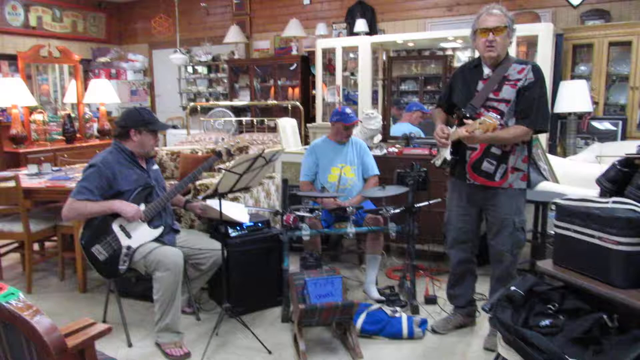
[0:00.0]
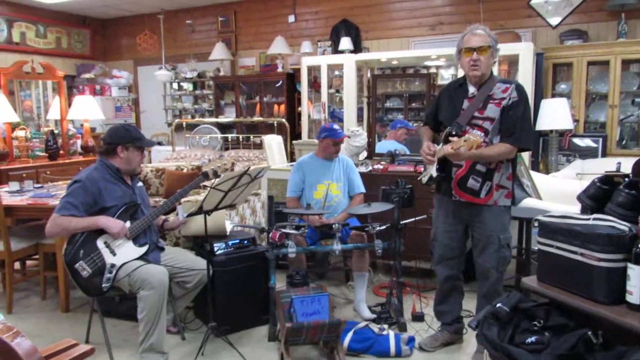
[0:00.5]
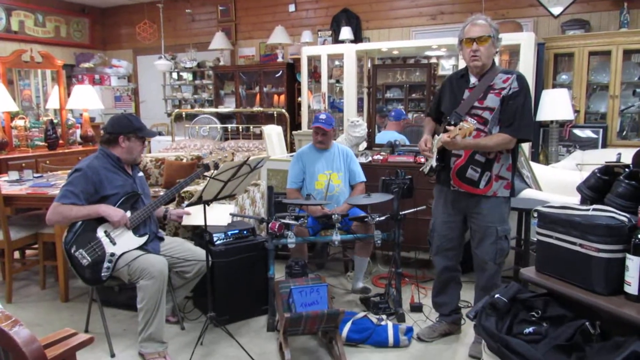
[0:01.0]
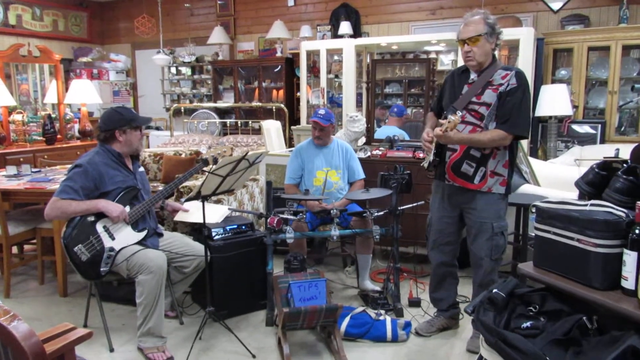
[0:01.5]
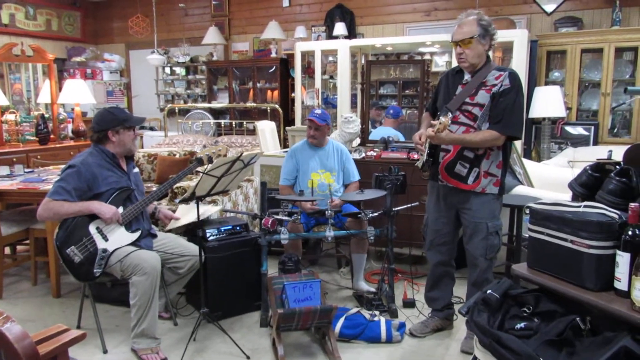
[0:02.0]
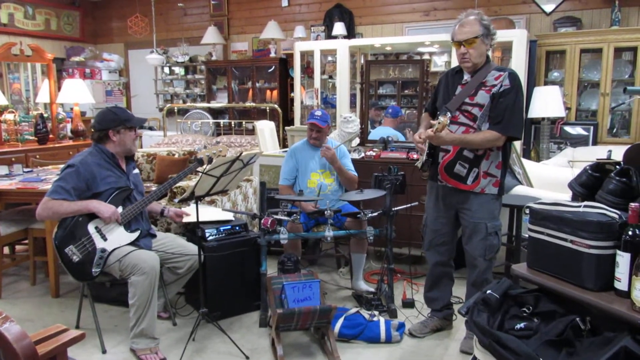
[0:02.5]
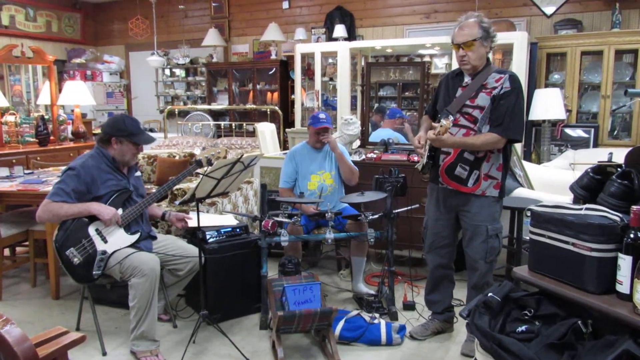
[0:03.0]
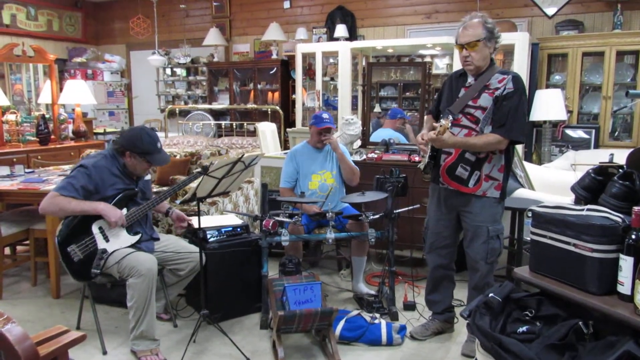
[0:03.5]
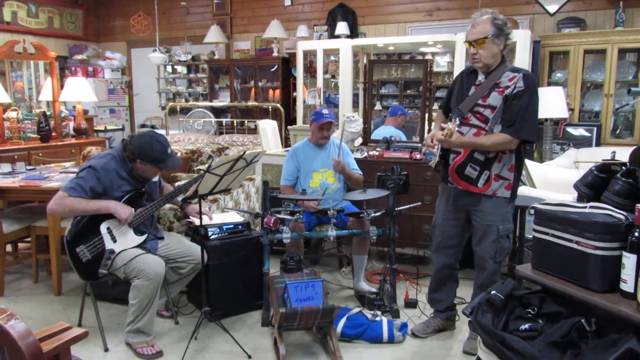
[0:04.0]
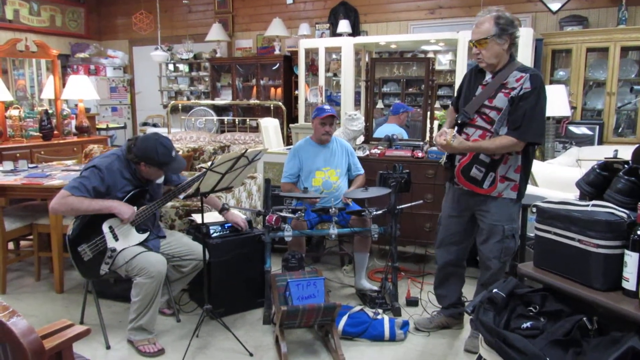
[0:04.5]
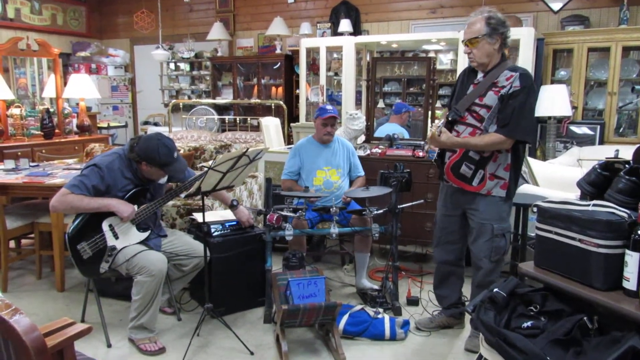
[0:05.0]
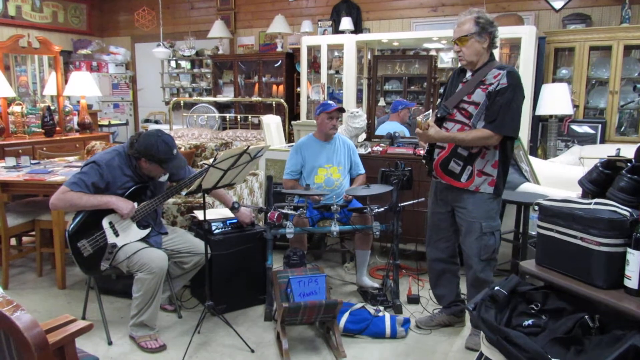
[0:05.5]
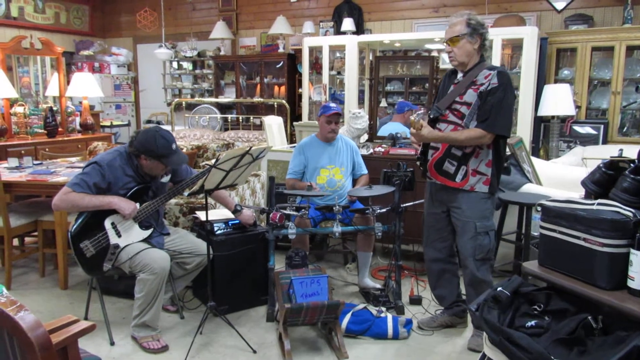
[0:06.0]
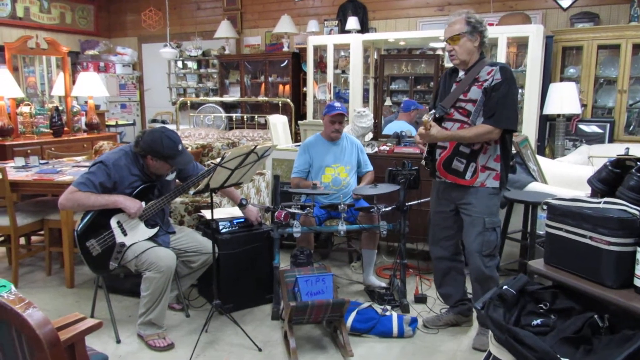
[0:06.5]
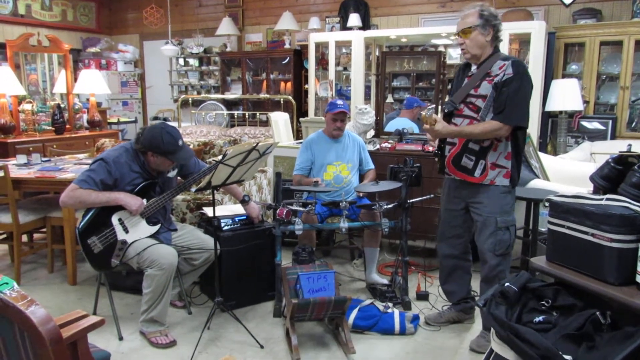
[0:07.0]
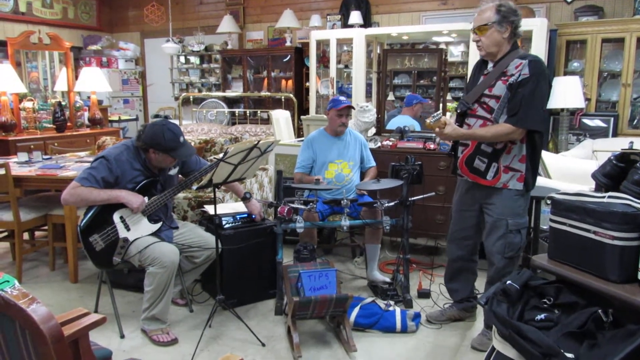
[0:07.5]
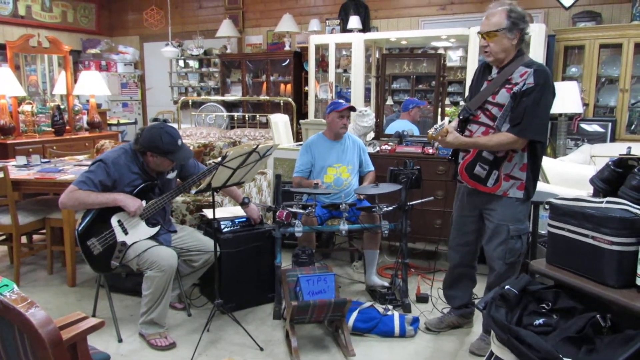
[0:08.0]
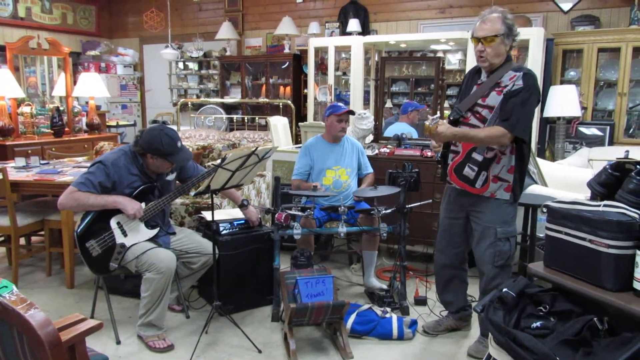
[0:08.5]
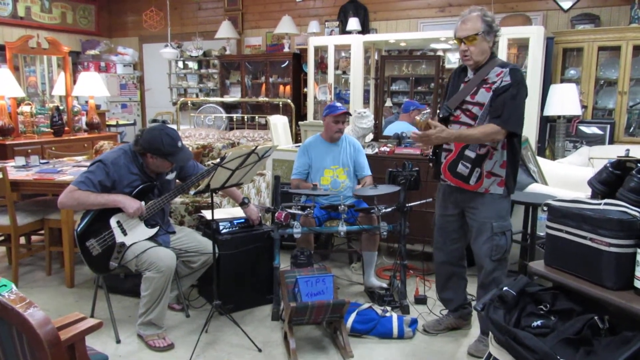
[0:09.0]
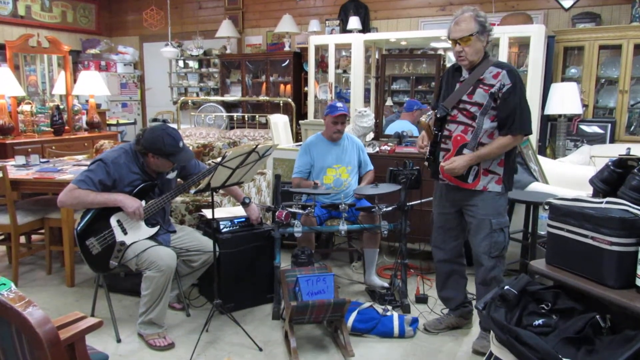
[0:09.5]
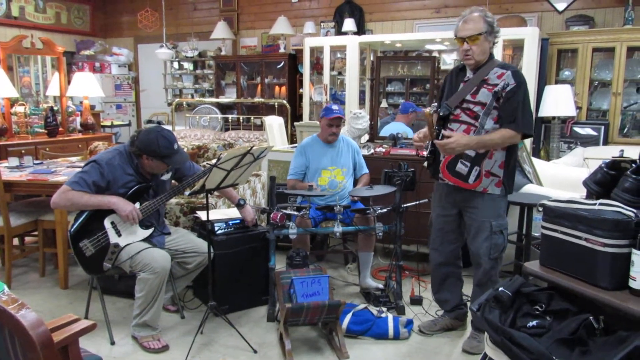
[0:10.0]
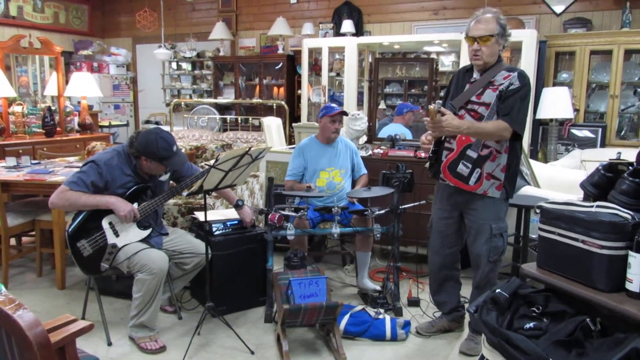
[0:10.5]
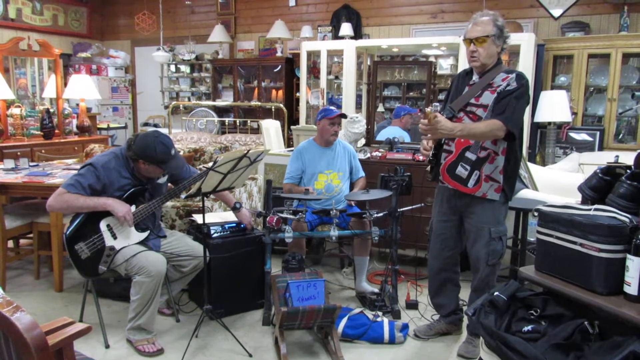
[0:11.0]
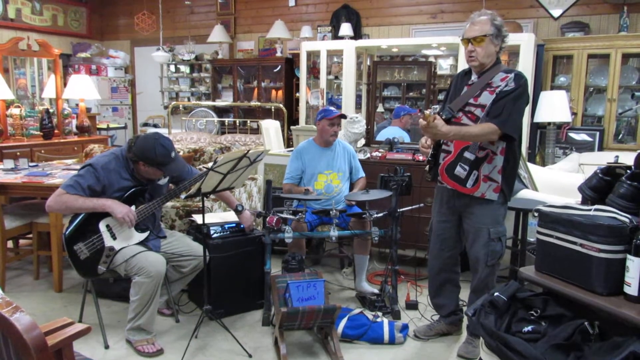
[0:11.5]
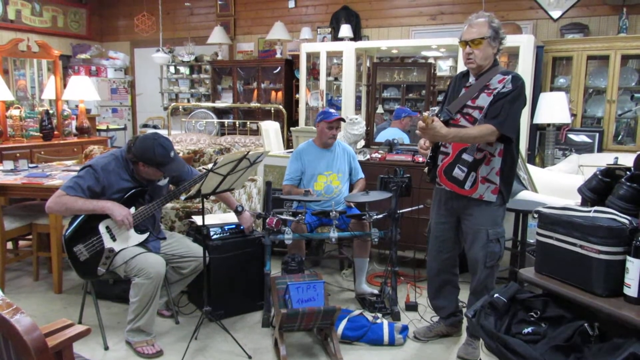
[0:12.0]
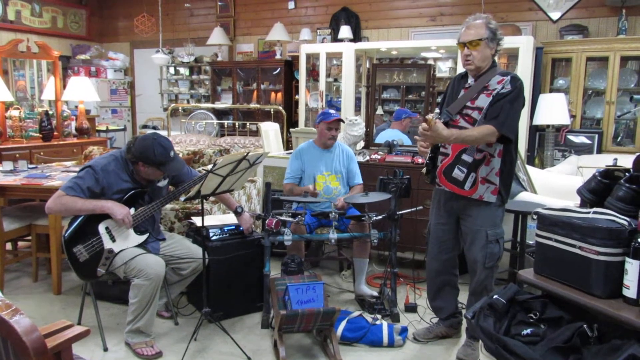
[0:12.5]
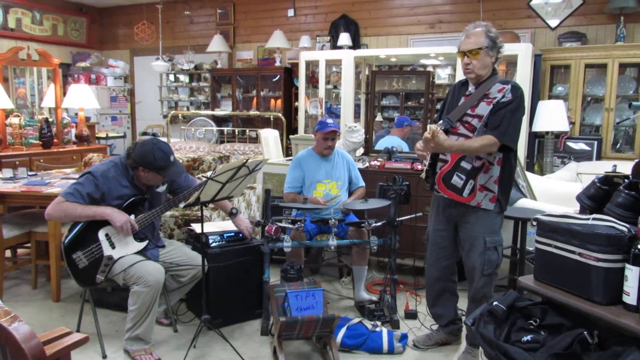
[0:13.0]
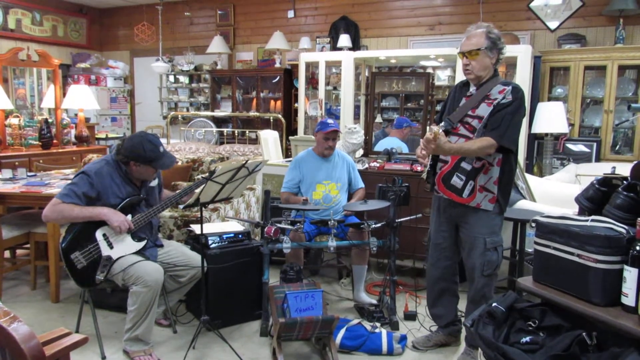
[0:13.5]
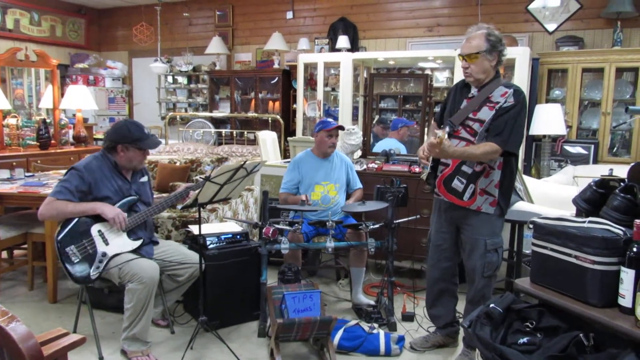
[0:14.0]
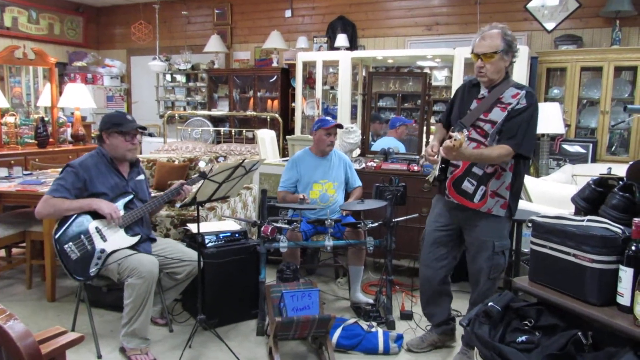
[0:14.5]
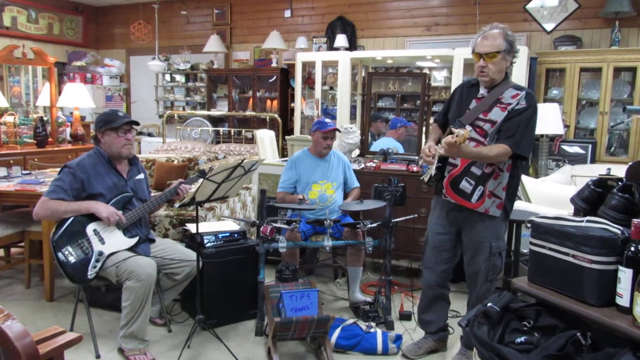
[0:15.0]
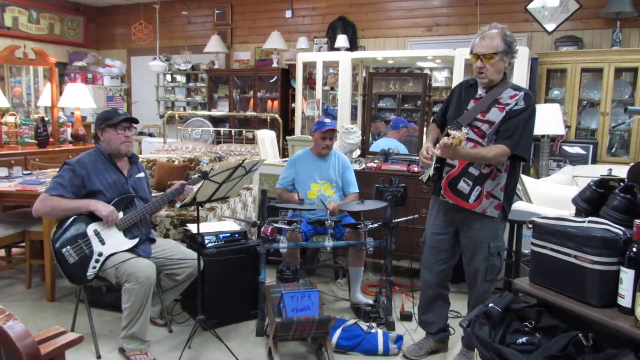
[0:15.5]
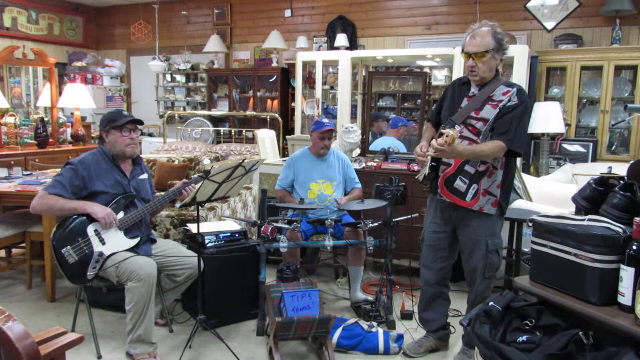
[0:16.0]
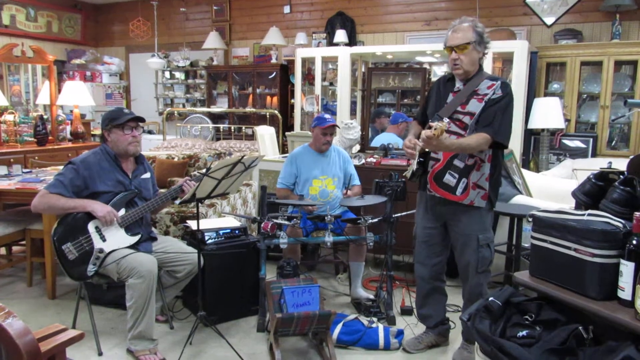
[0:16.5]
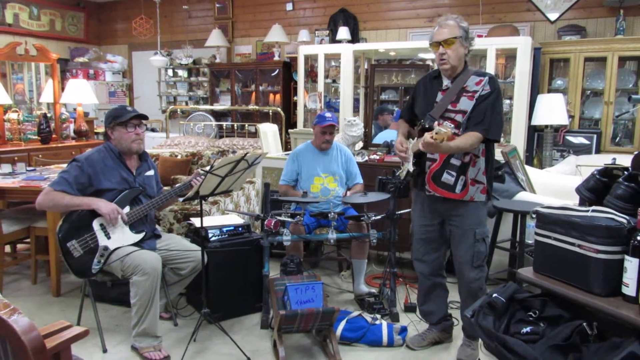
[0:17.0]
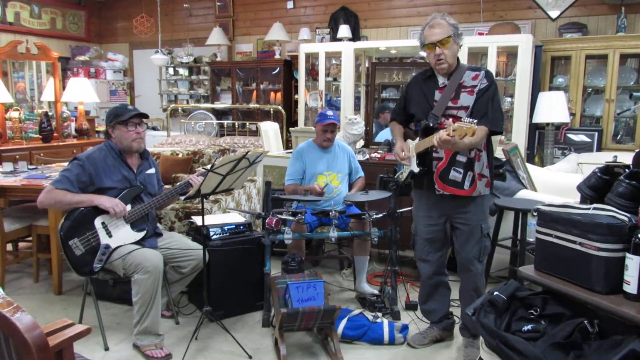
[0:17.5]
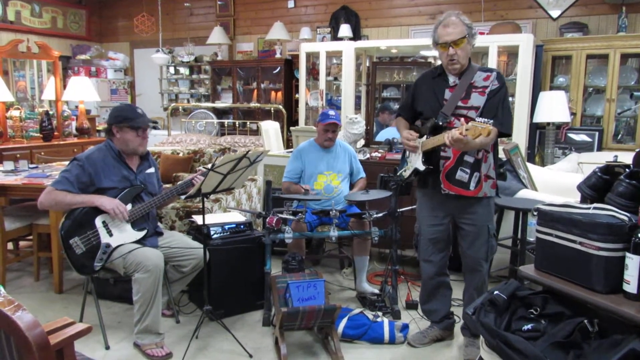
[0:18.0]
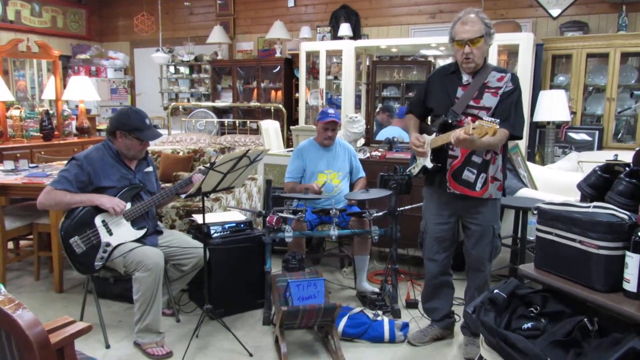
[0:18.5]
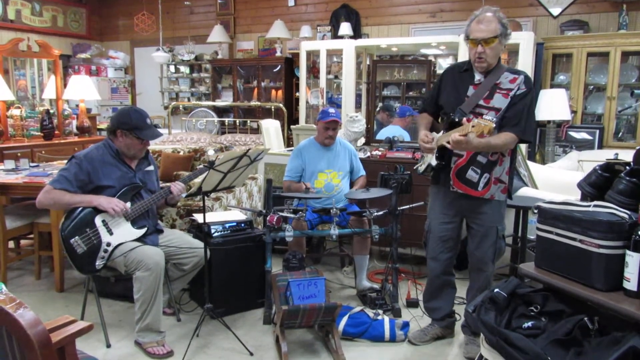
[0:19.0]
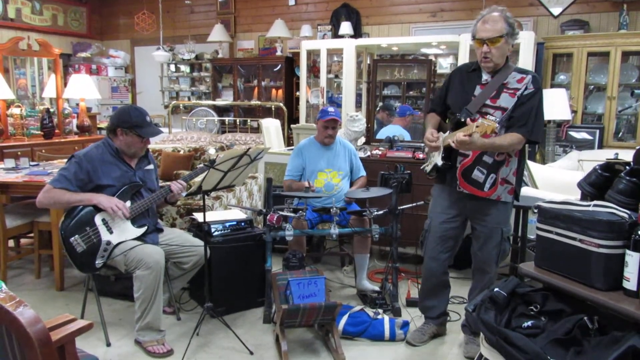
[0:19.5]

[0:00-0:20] A three-person band plays in what looks to be a thrift store: a drummer, a bass guitarist and a main guitarist. In the background there are cabinets, lamps, tables and figurine-looking things, mostly brown in color, and one of the big cabinets is white. Among the musicians, the guitars are standing, and one has yellow glasses and grayish, receding hair. The drummer wears a lot of blue: a blue hat, a light blue shirt with a yellow emblem, blue shorts and white socks. The bass guitarist's guitar is white and black. Both the drummer and the bass guitarist wear baseball caps; the bass guitarist's is kind of black, his shirt is a kind of bluish-grayish color, and he wears white pants. The lead guitarist wears a kind of grayish jean color. There is a bag that is blue and gray or blue and white, and on the right side of the screen there is something black and white that looks almost like luggage. There are lots of lamps, and a fan is running in the background.